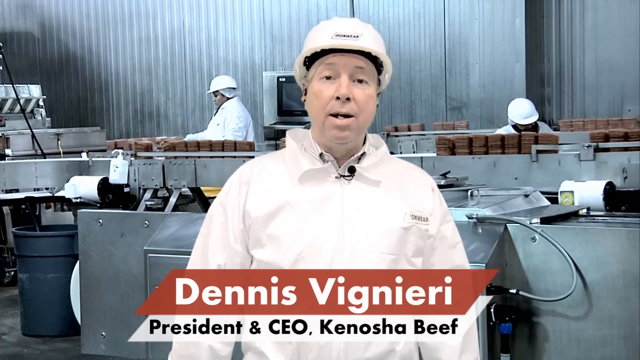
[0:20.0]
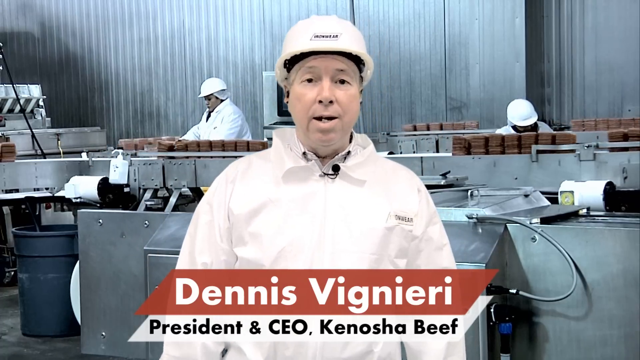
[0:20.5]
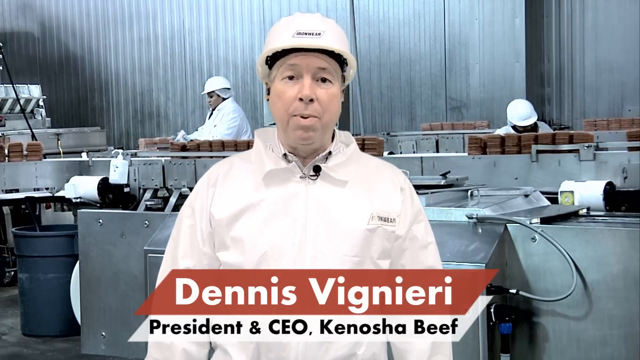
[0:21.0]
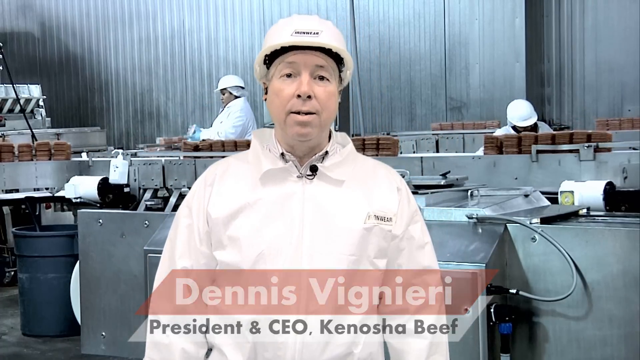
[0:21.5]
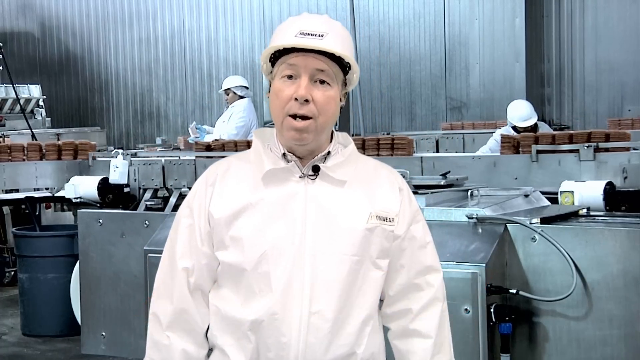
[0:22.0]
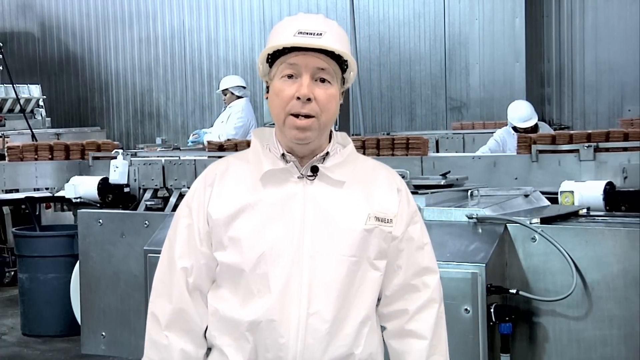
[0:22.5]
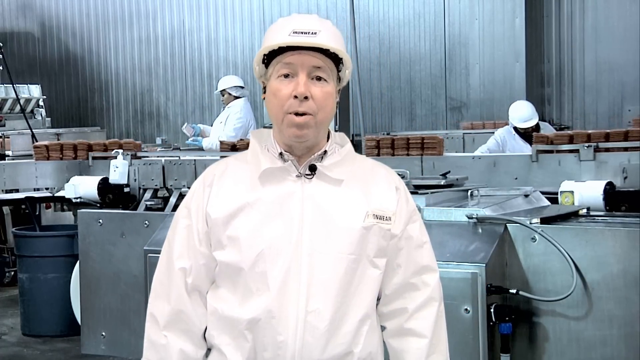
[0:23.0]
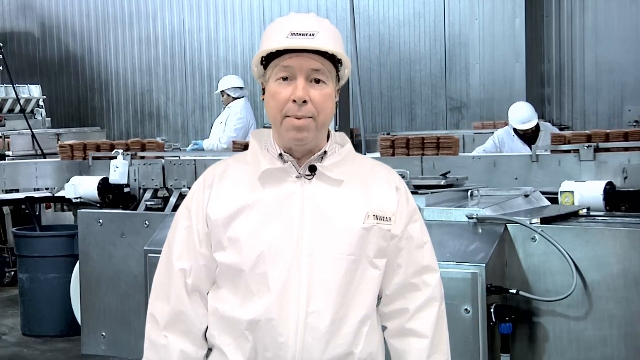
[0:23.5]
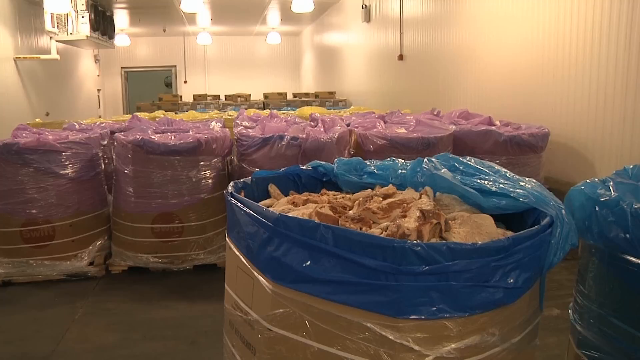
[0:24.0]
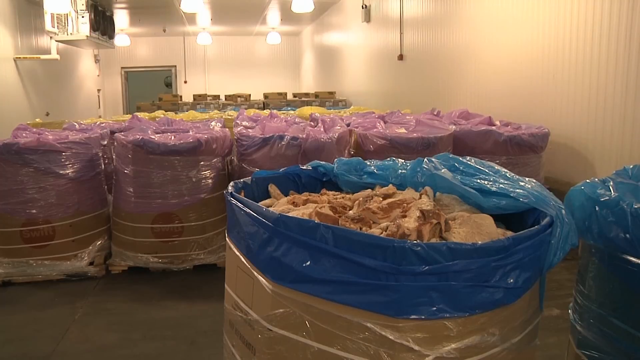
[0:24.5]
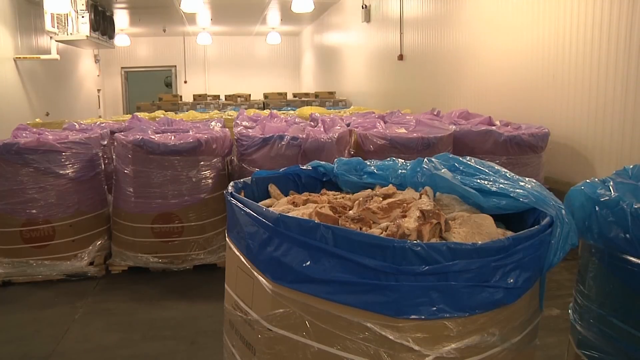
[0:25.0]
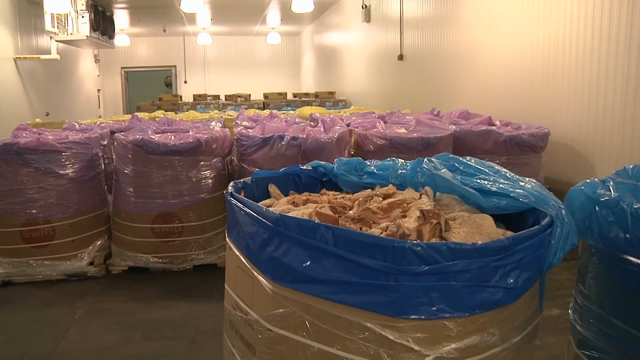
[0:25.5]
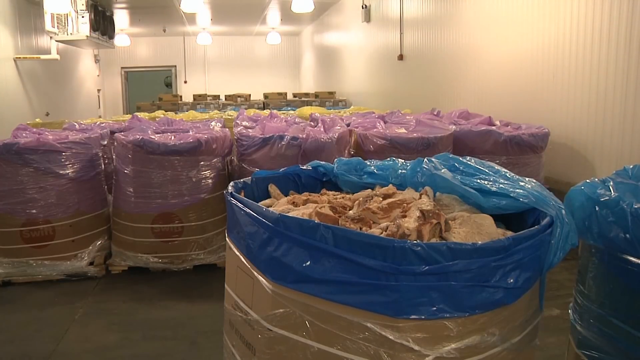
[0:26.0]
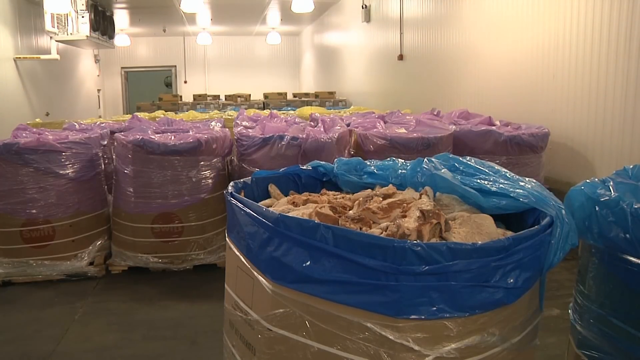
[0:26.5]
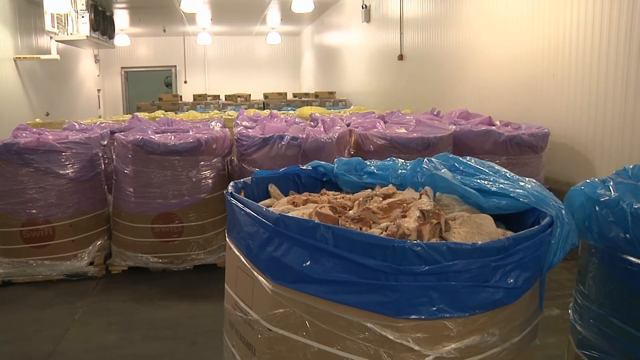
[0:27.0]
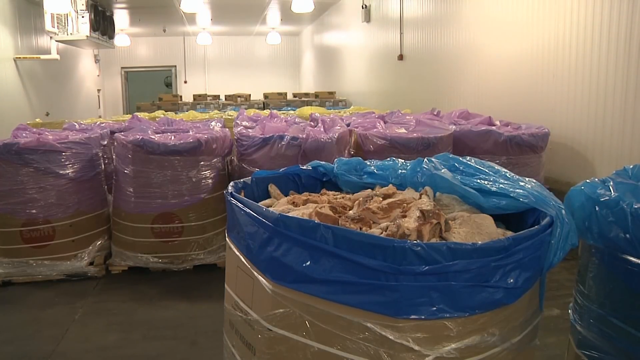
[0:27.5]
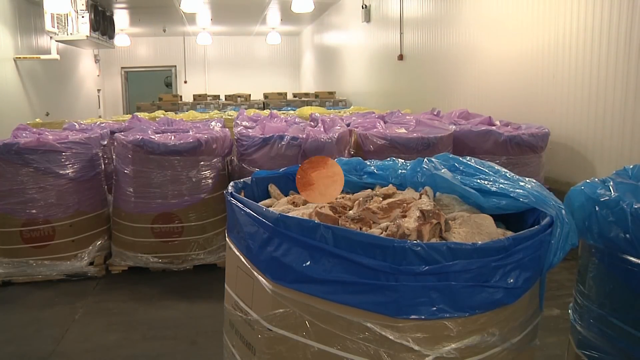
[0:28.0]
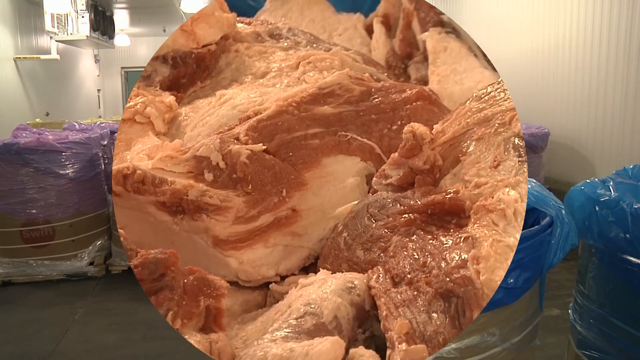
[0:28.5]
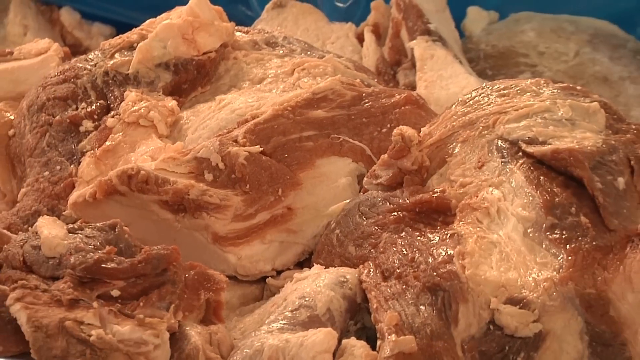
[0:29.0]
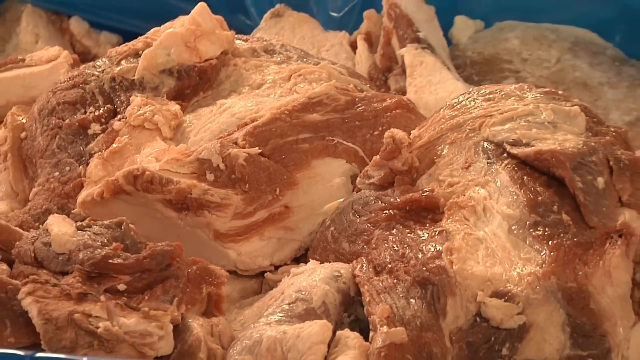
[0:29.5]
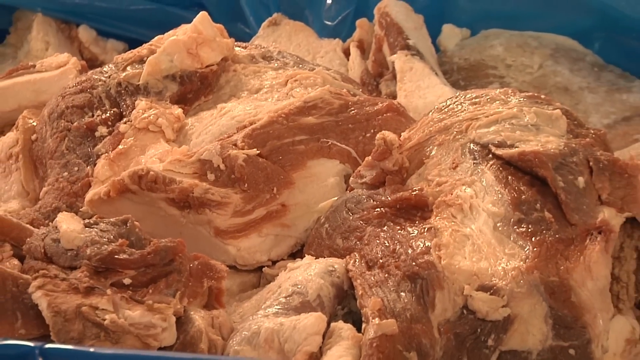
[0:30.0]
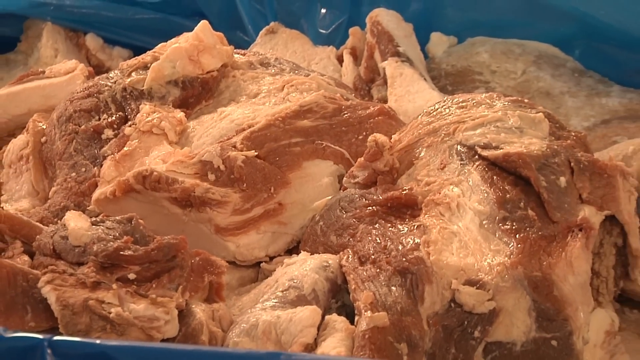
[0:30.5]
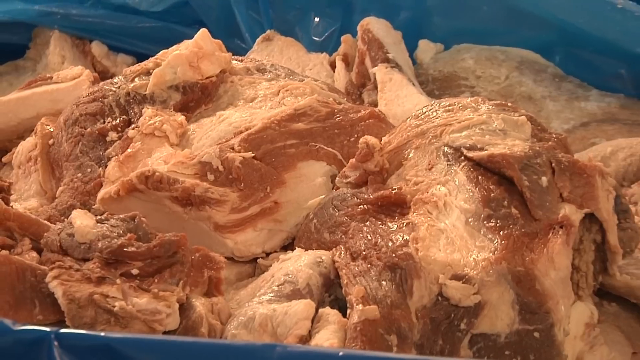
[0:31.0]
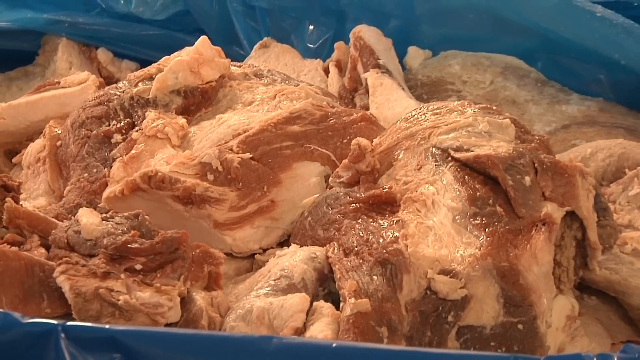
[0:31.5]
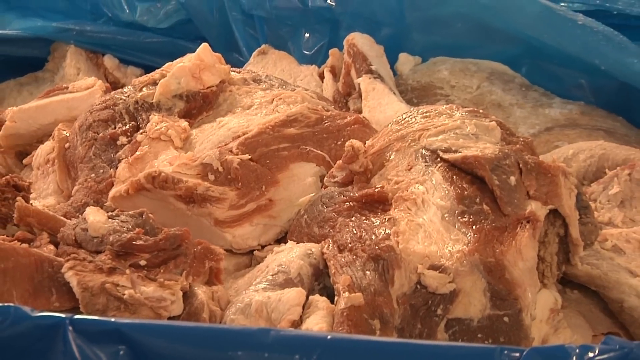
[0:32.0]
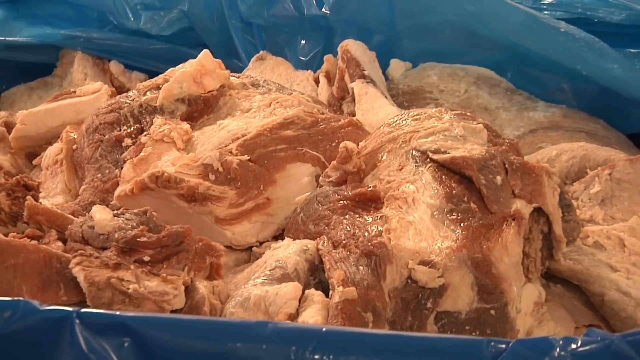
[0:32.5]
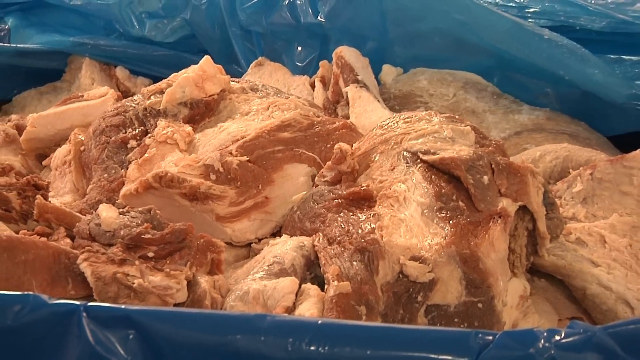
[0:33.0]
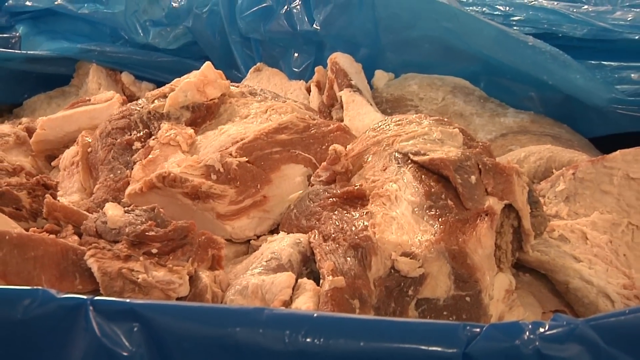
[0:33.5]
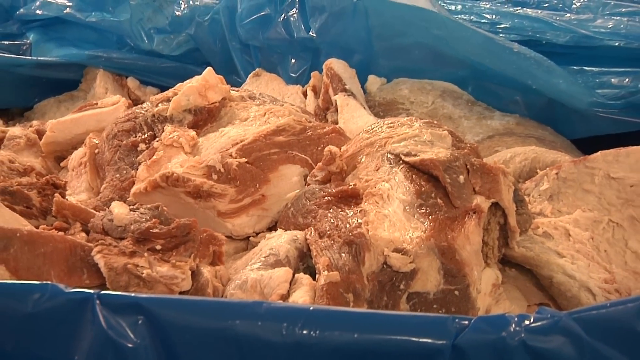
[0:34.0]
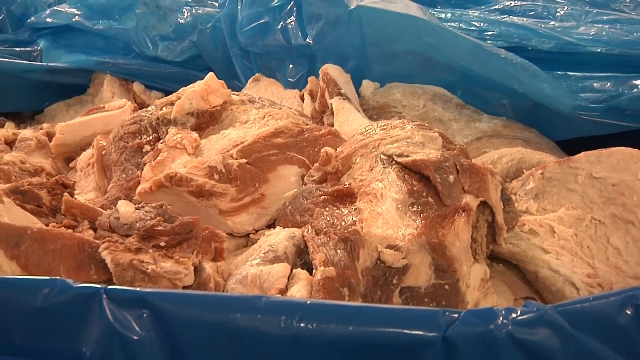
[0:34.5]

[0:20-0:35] Unprocessed beef appears in barrels, possibly before being ground, seemingly waiting for the cuts of meat to be processed. There are a lot of barrels, possibly color coded; three different colors of barrel are visible, with different colored bags lining the barrels. The setting changes from the processing floor to what may be a refrigerated holding area.